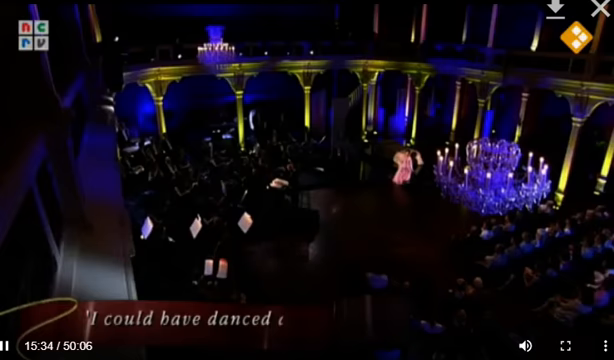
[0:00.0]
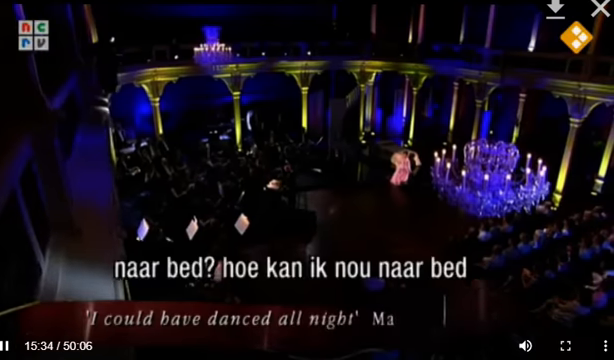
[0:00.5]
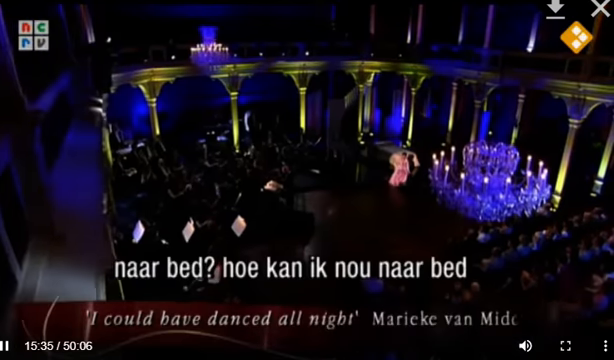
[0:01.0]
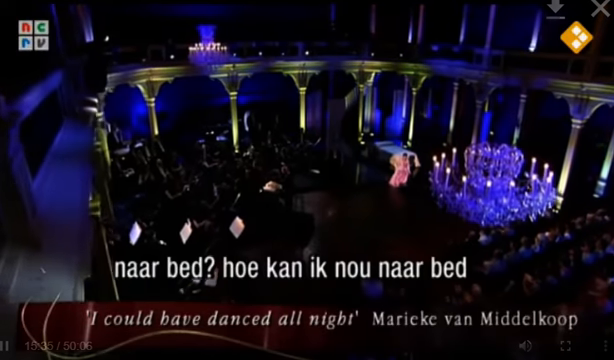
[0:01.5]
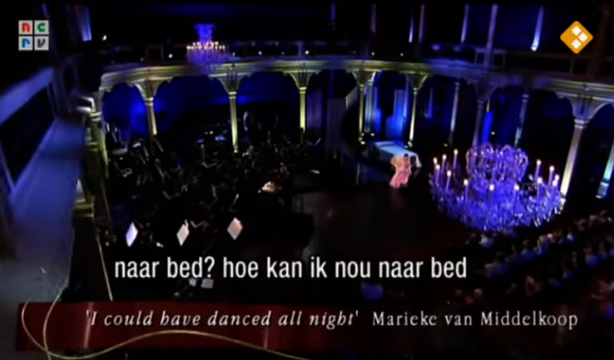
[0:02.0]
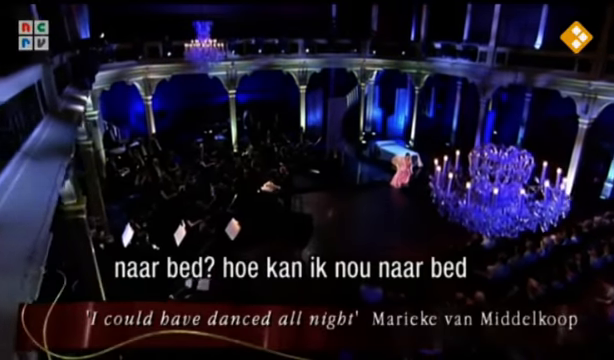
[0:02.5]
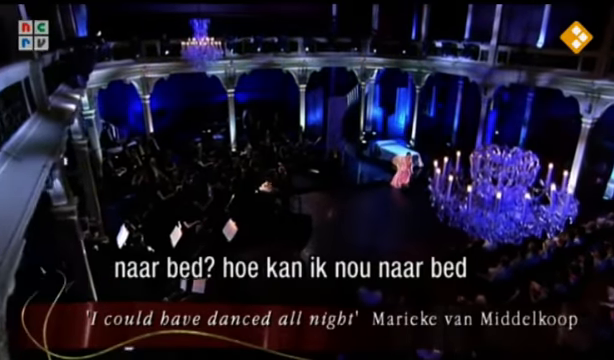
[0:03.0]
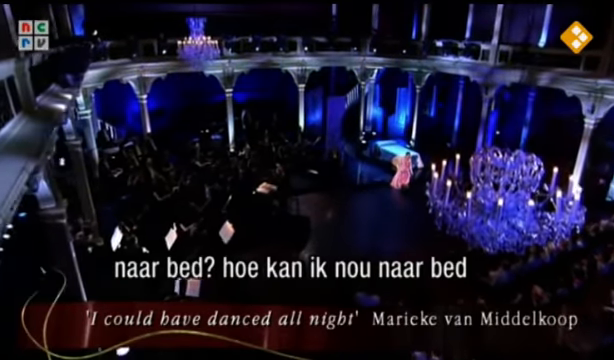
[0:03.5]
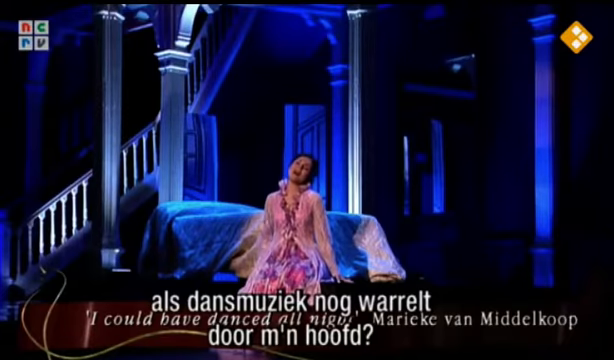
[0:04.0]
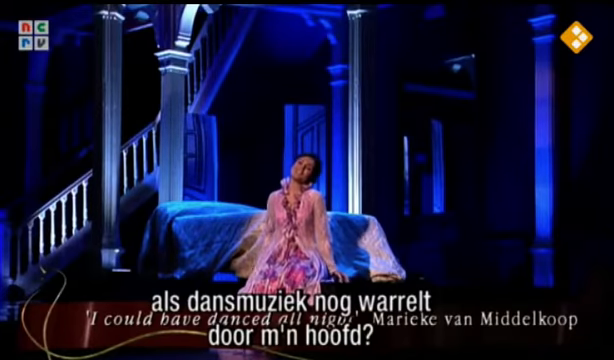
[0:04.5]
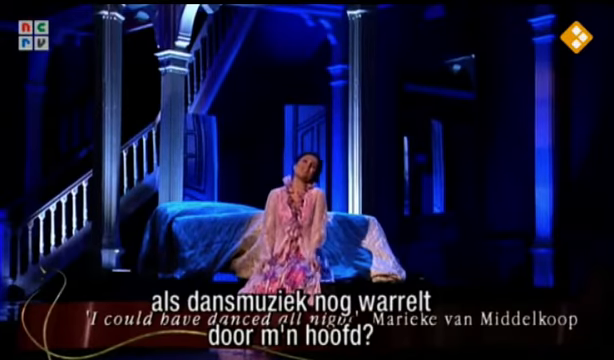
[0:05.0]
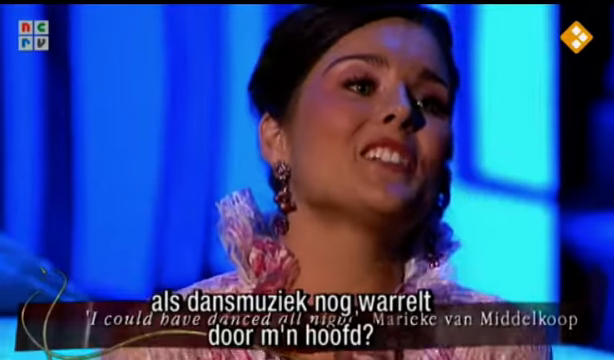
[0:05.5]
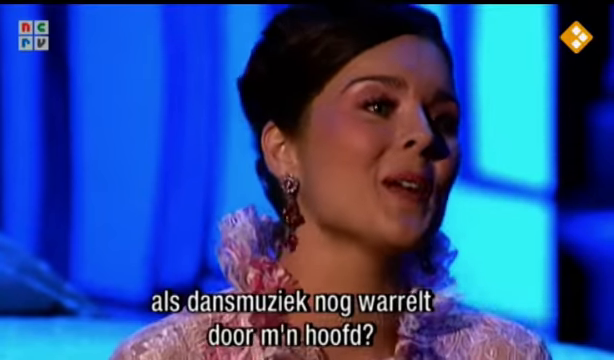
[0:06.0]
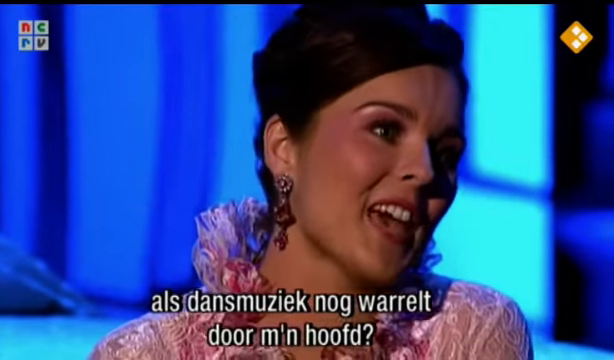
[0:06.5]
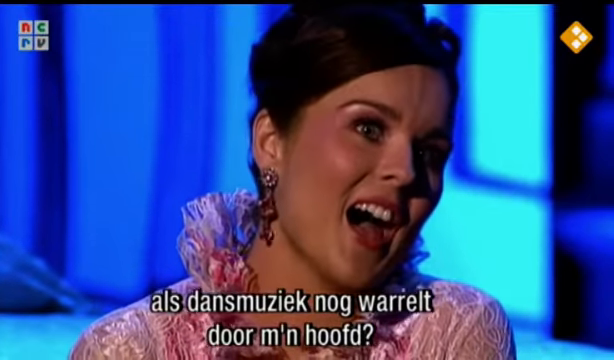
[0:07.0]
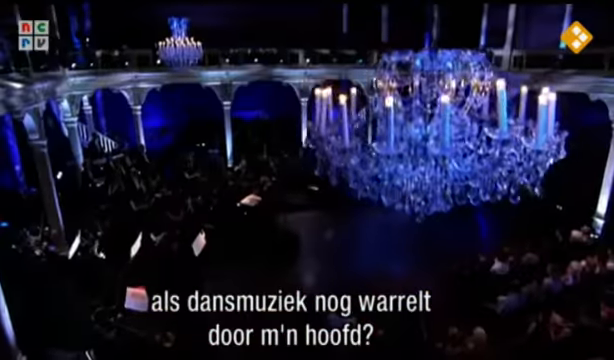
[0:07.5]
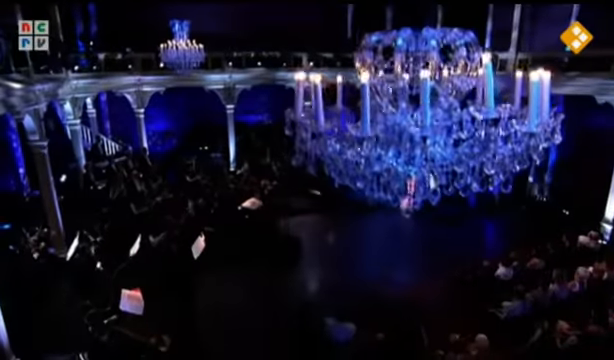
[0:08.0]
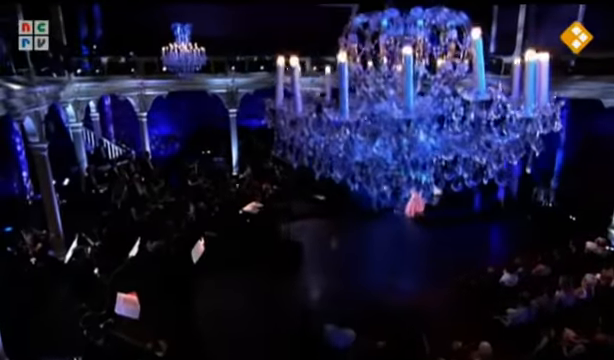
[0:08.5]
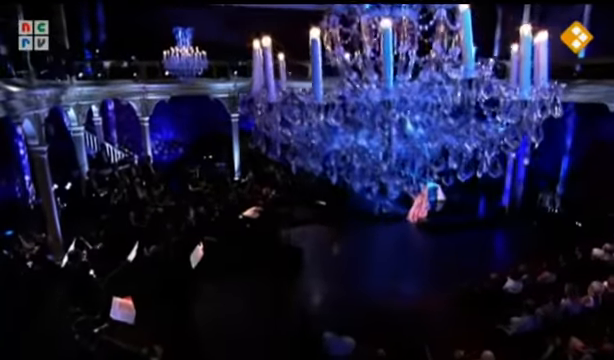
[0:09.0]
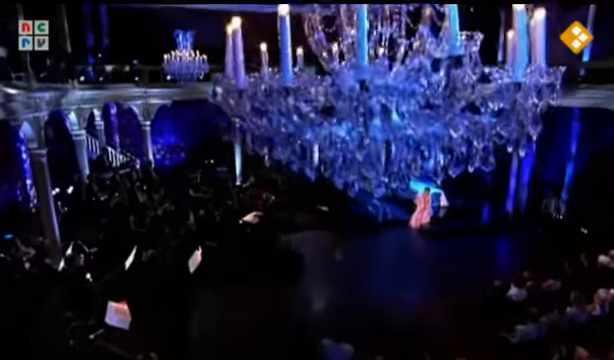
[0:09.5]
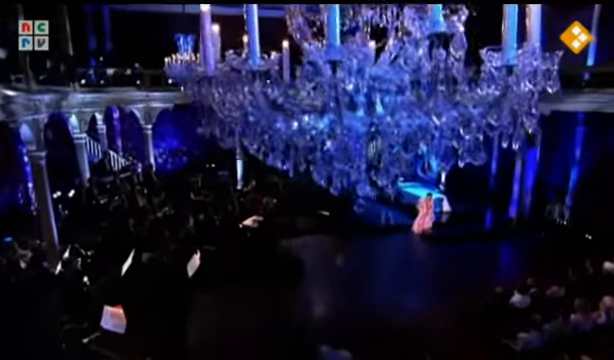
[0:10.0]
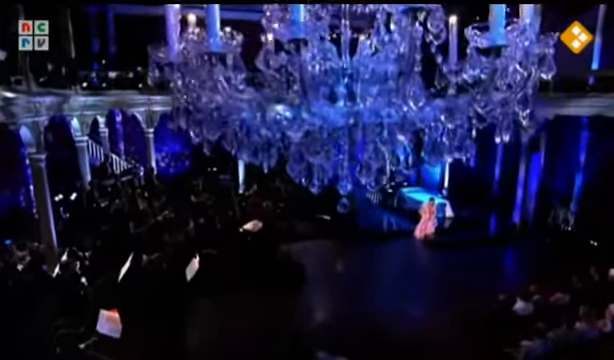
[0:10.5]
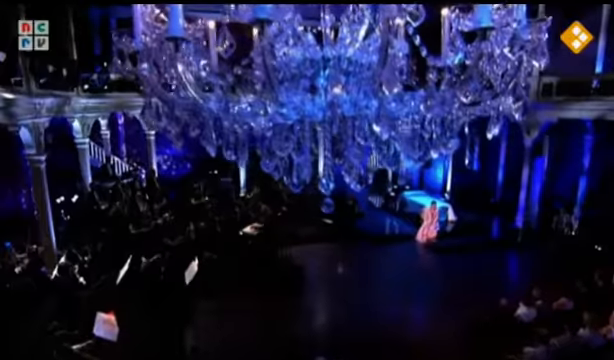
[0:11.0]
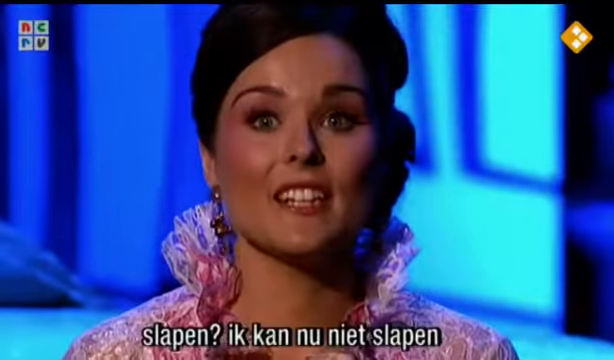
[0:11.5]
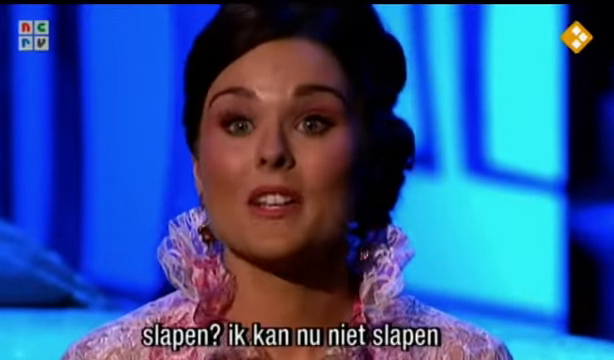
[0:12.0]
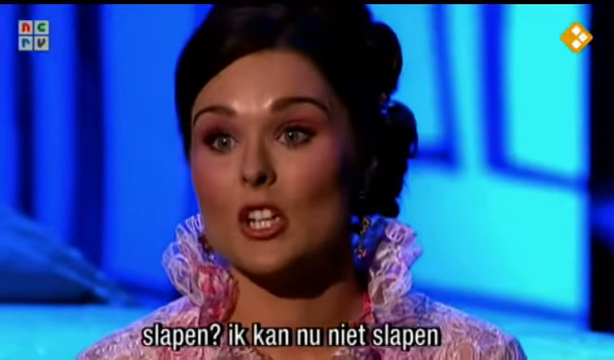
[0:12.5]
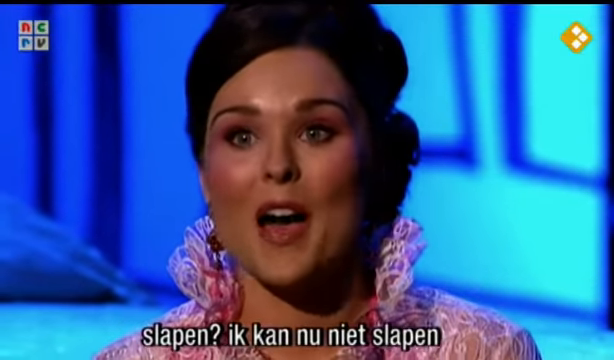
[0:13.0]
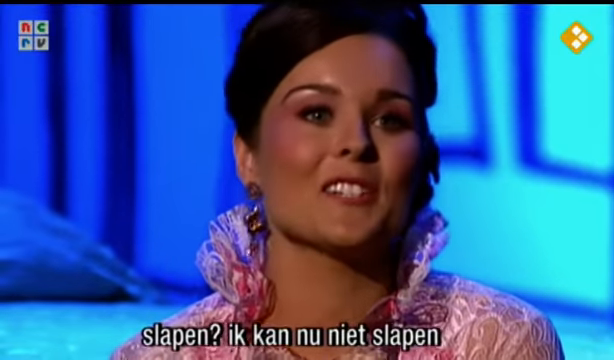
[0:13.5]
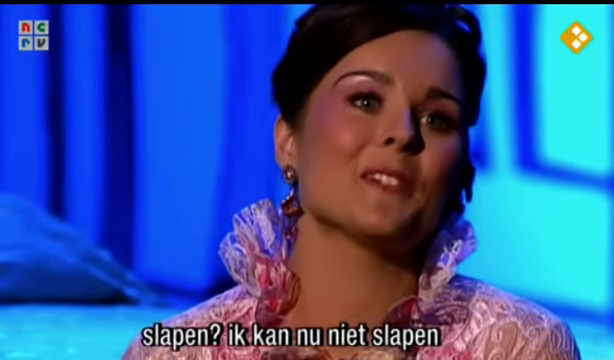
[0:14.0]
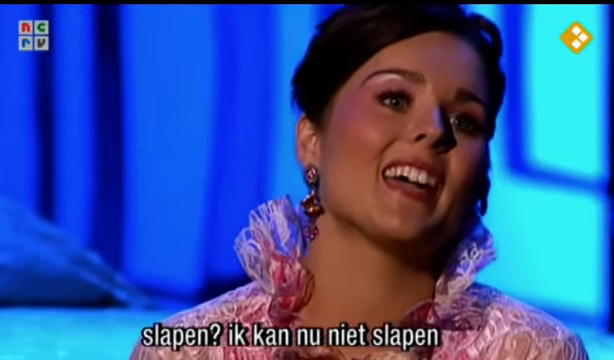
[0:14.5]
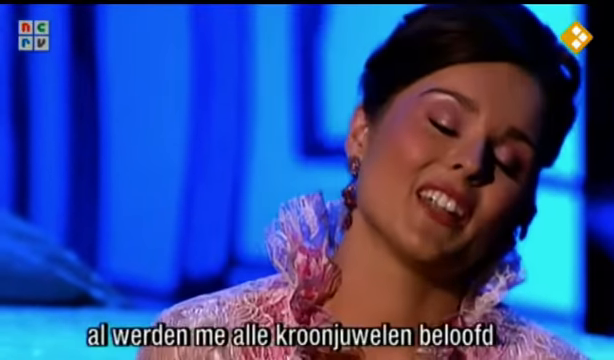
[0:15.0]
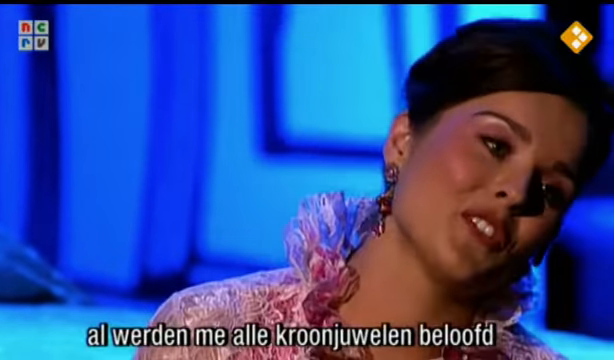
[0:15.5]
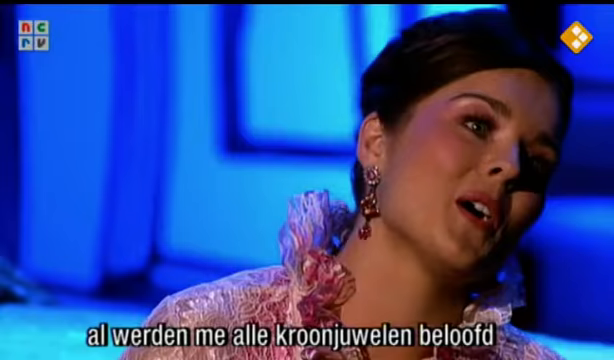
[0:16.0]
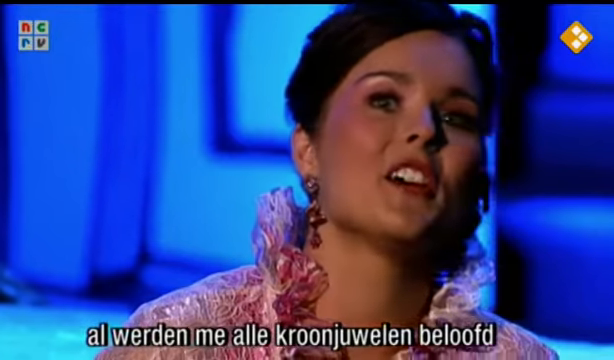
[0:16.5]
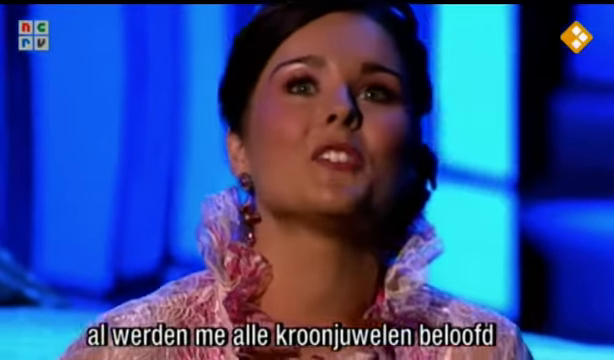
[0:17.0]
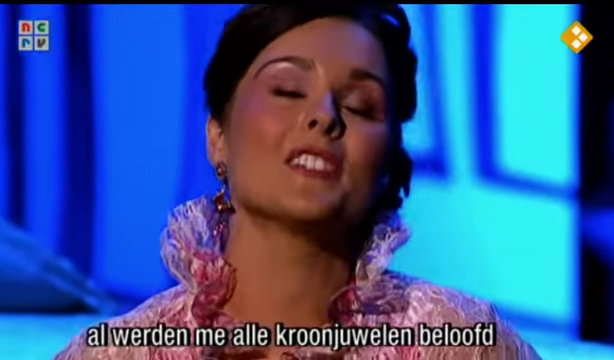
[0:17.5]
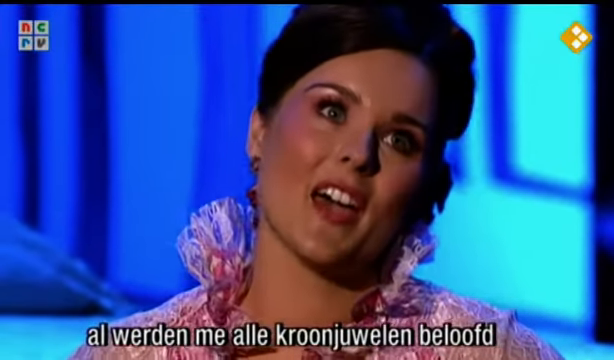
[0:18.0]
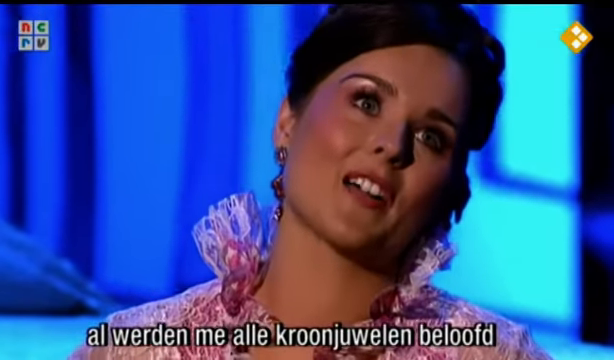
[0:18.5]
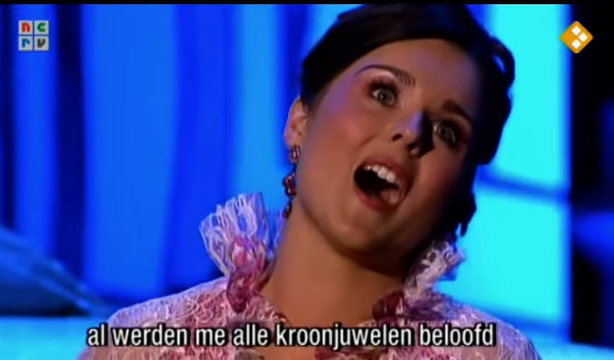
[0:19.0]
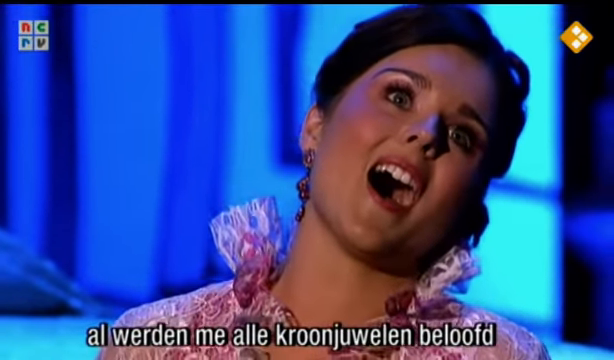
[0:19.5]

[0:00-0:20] A woman gives a musical performance. Text at the bottom of the screen gives the song title, "I Could Have Danced All Night", and the singer or artist, "Marieke van Middelkoop". The setting is a large auditorium with glowing purple chandeliers. One woman is on a stage where the set is arranged to look somewhat like a bedroom, with a bed behind her, a few doors, a window, and a long staircase going upstairs. She is sitting in front of the bed, wearing a pink dress with a high collar and dangling pink earrings. She seems to be singing, smiling, with her hair in a fancy updo and rosy pink makeup. Her face is very expressive as she confidently gazes into the crowd. There seem to be captions for the song, apparently in German.